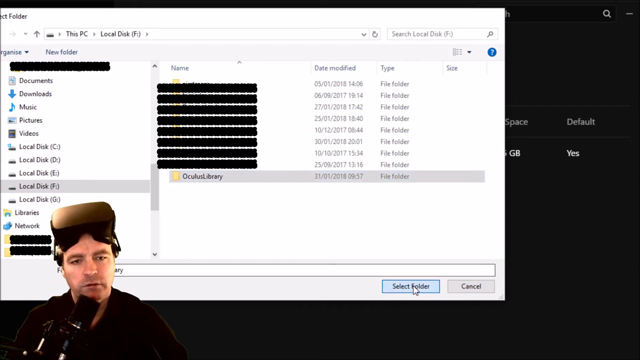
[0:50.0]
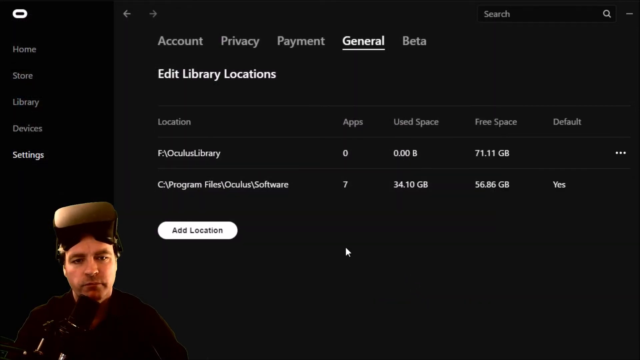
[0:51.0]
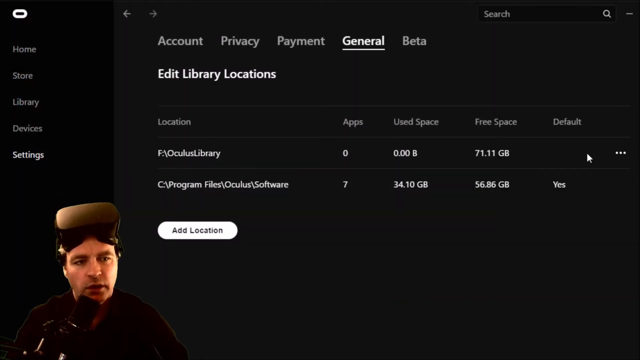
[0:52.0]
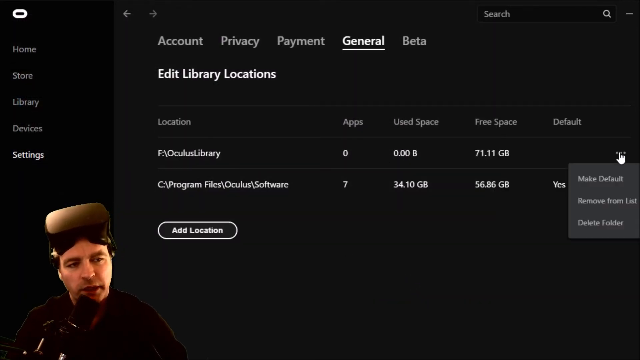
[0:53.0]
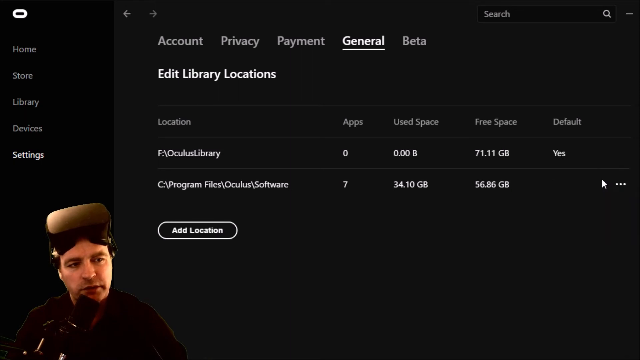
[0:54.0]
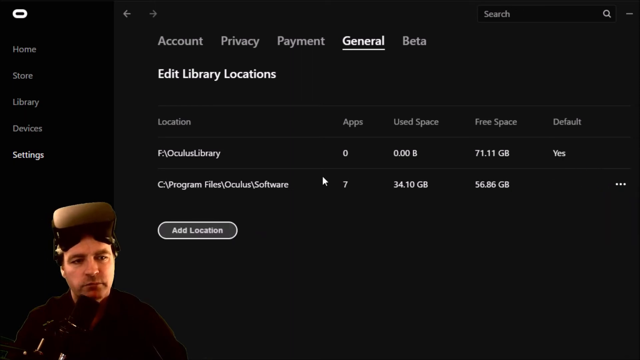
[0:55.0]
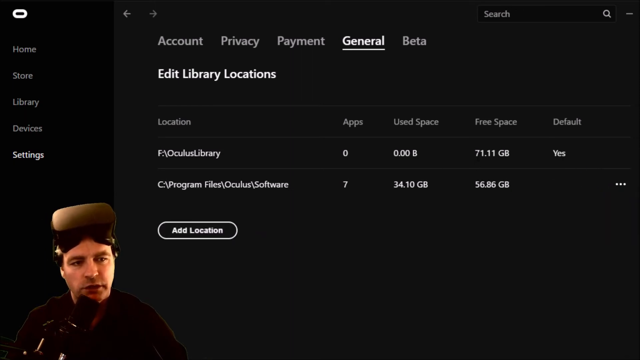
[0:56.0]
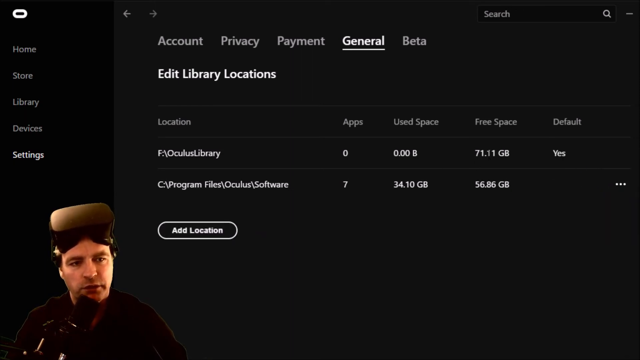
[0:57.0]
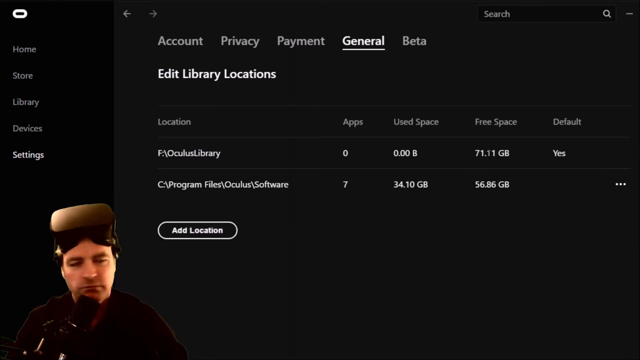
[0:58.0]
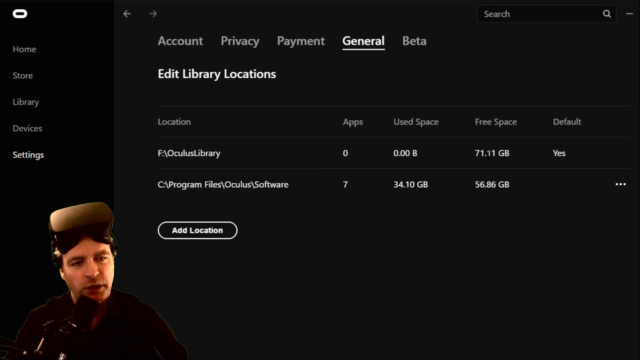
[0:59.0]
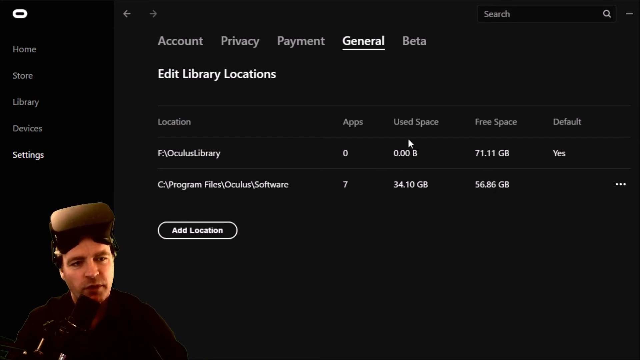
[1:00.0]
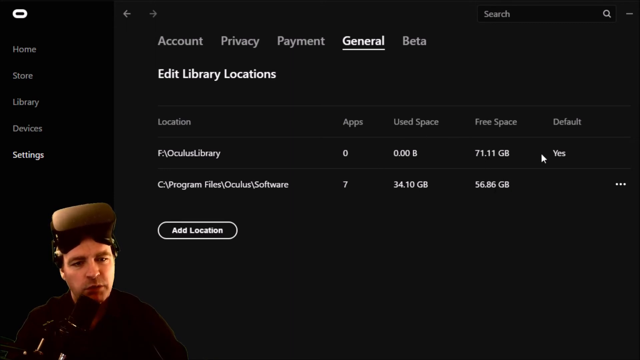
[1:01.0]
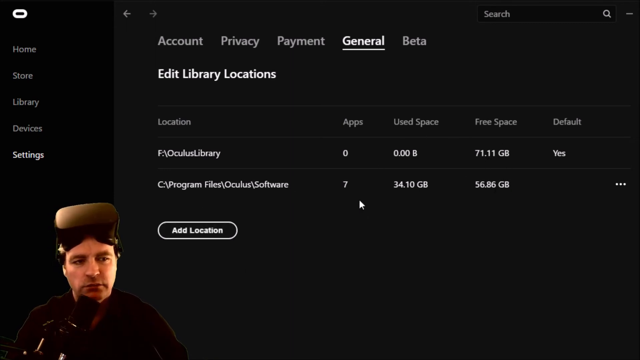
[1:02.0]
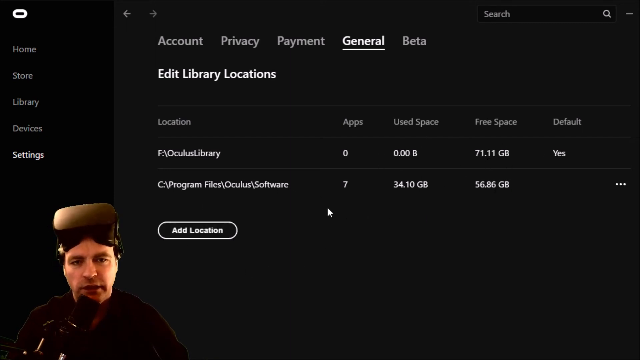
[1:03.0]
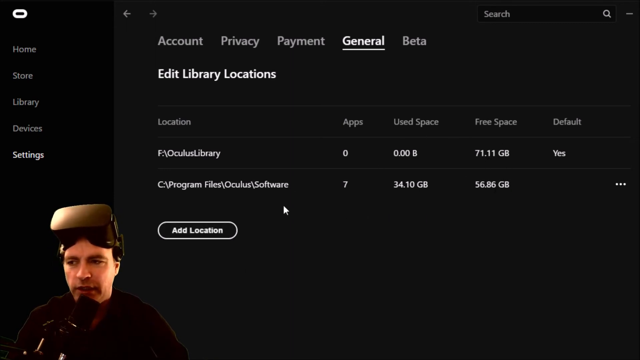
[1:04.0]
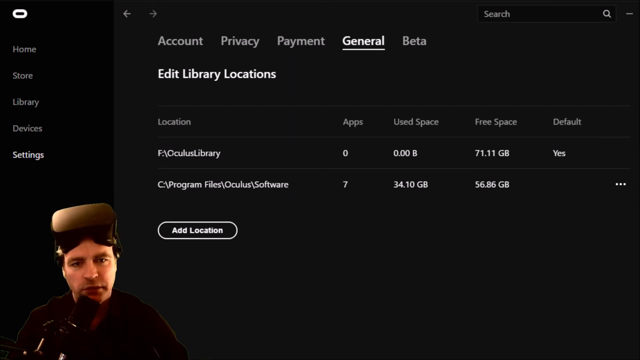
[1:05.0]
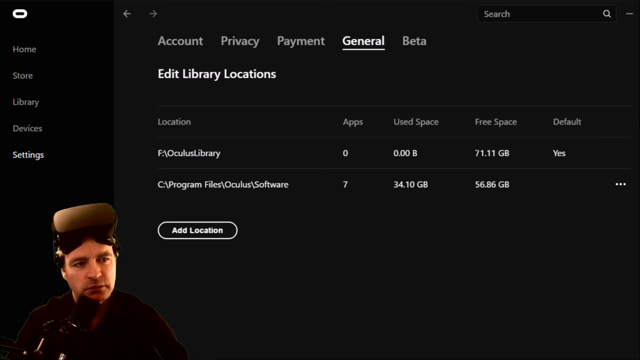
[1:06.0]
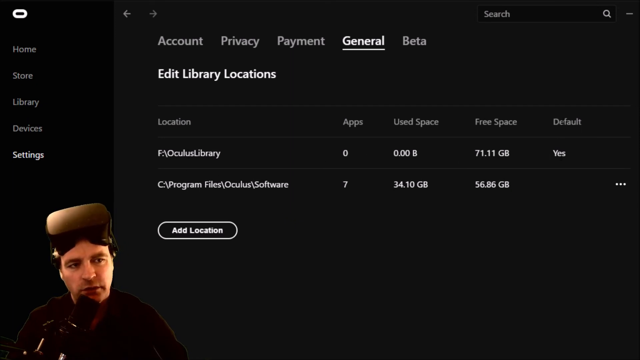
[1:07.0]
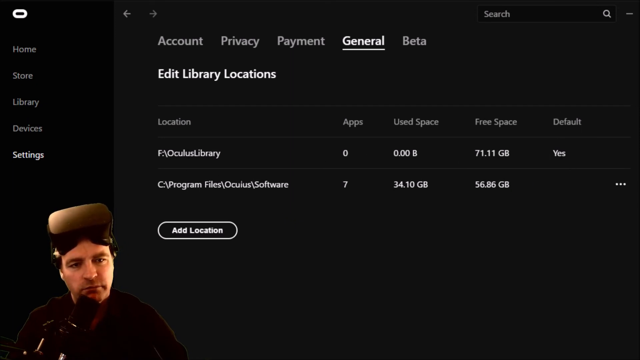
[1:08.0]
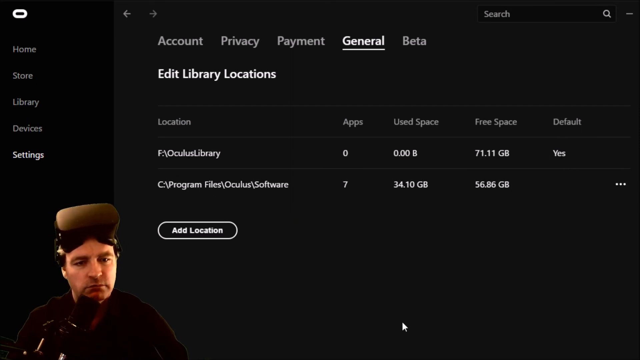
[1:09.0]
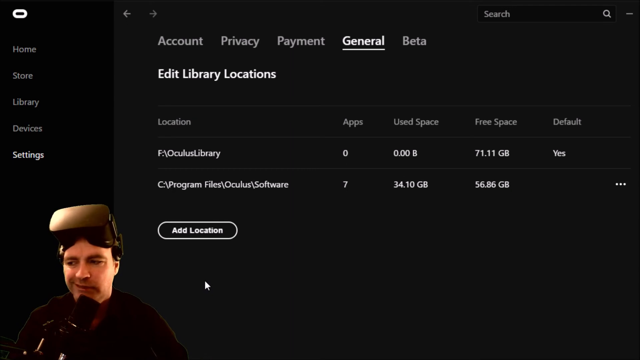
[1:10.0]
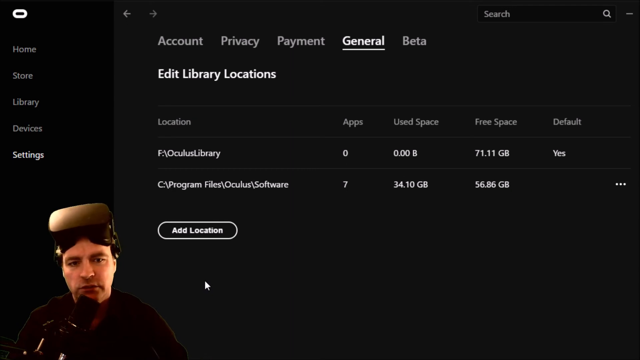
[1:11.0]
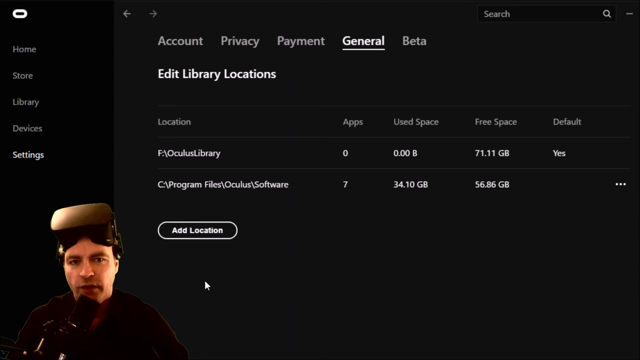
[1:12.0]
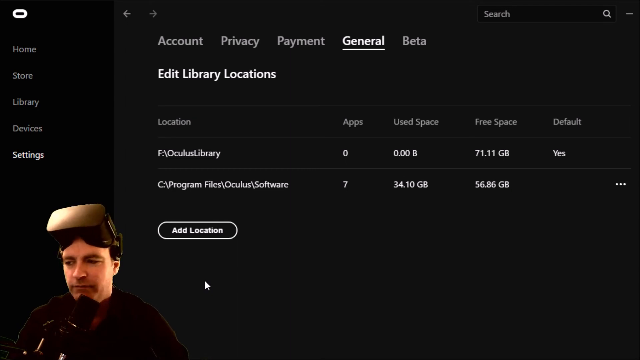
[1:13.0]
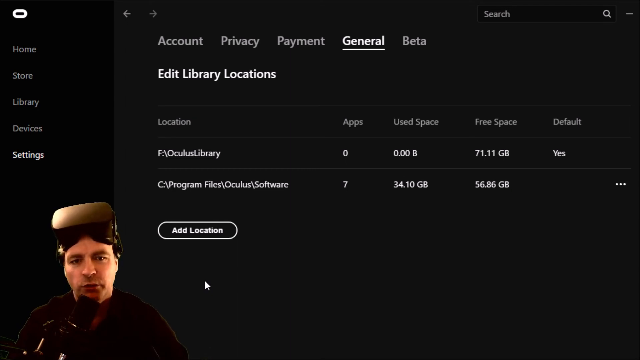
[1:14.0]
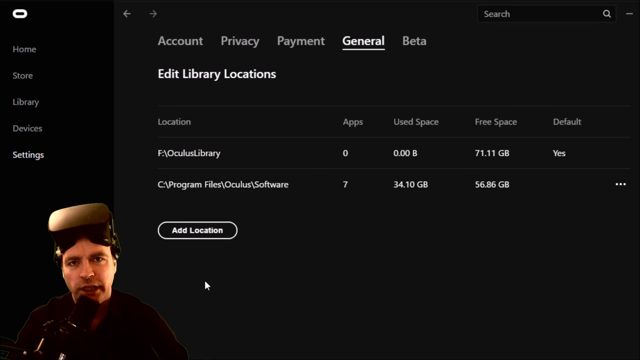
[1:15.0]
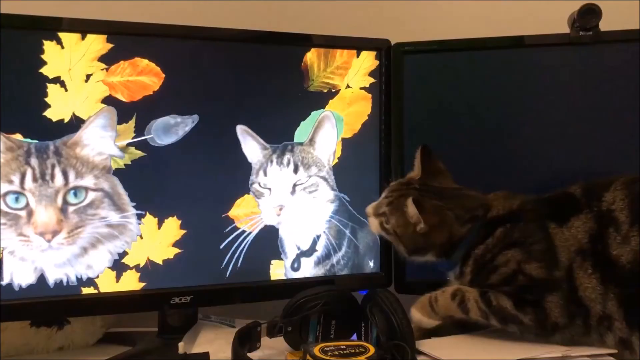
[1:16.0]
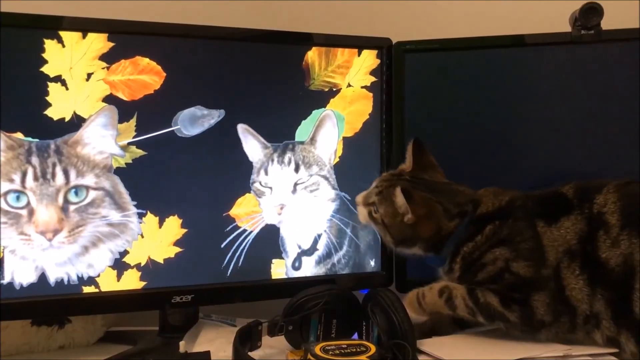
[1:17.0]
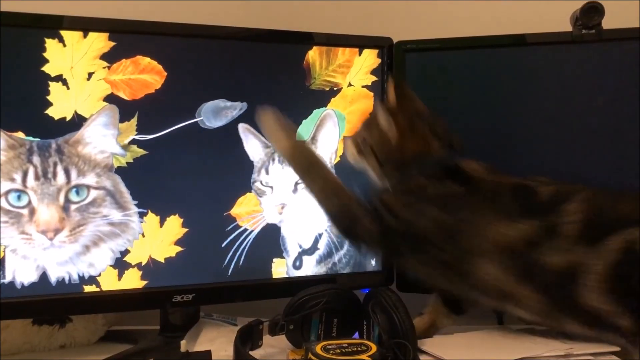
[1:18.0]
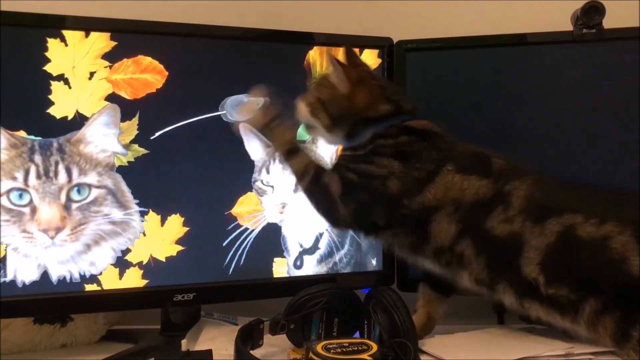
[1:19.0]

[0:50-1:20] The person has selected the folder he titled Oculus library and makes it the default library by right-clicking on default and setting it to yes. The screen shows 71.11 gigabytes of free space, zero used space and zero apps. He points out the different columns with his mouse and keeps talking. The next scene shows two screens: the right one is black and switched off, while the left-hand screen shows images of two cats along with yellow and orange leaves that look like maple and oak leaves. A mouse animal then appears in the center of the screen and moves to the right, and a real cat in front of the screen bats at the mouse and then tries to eat the screen to get it.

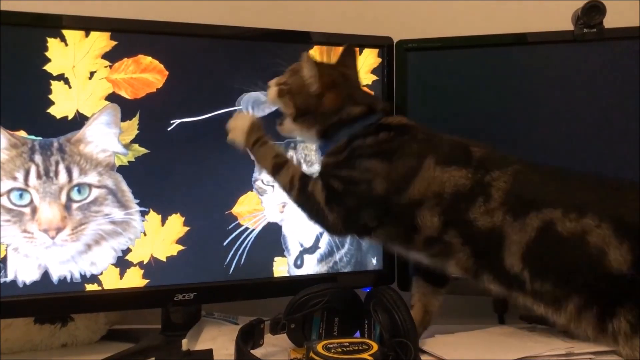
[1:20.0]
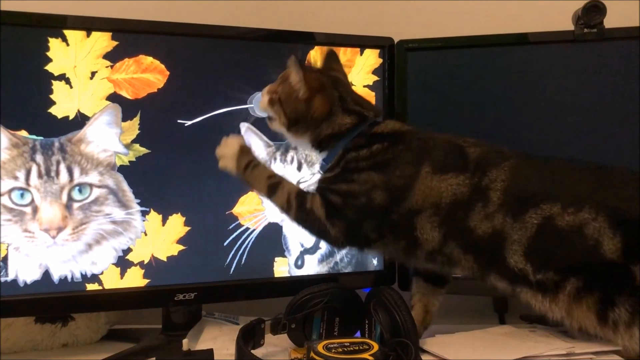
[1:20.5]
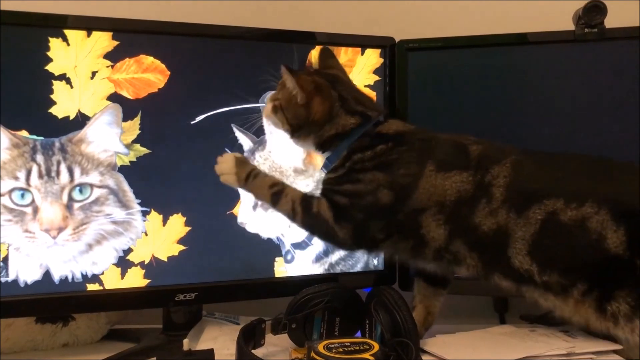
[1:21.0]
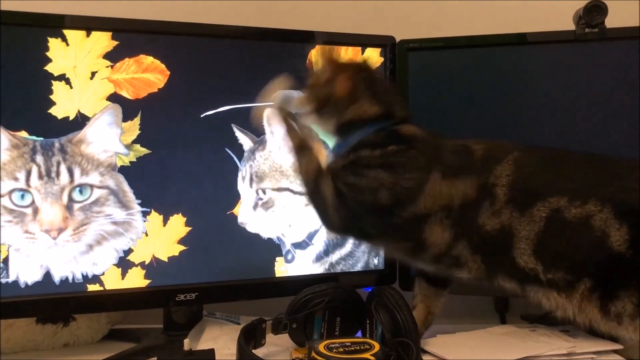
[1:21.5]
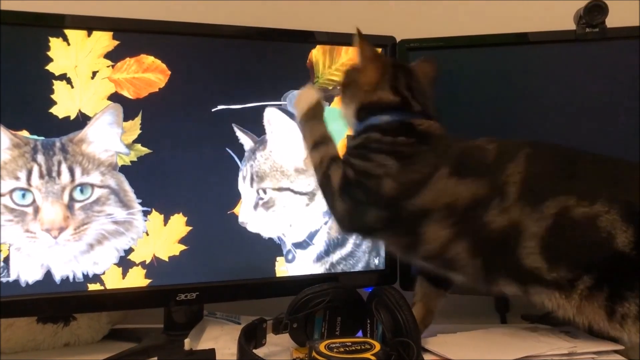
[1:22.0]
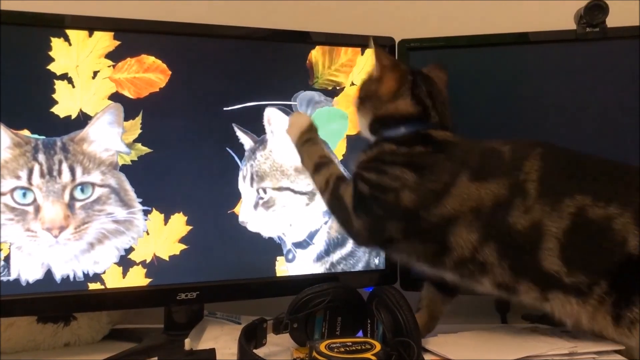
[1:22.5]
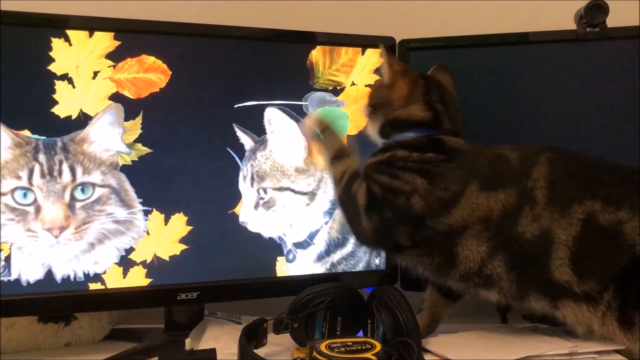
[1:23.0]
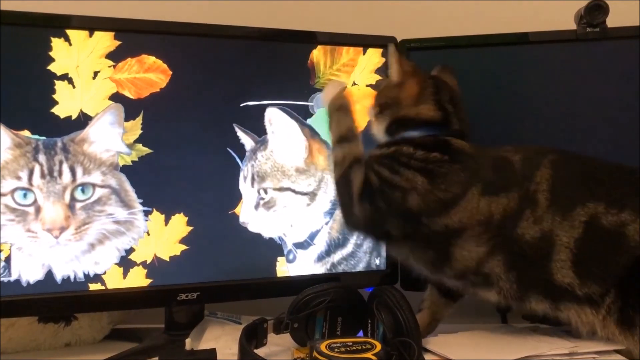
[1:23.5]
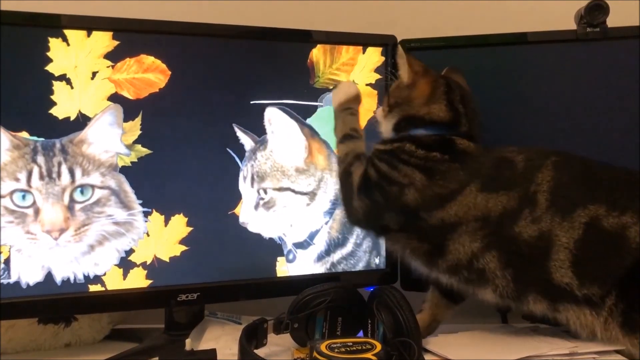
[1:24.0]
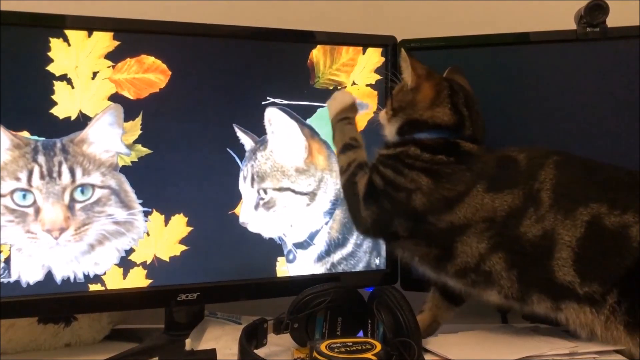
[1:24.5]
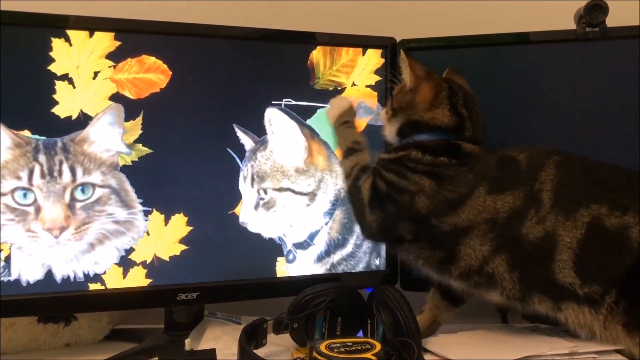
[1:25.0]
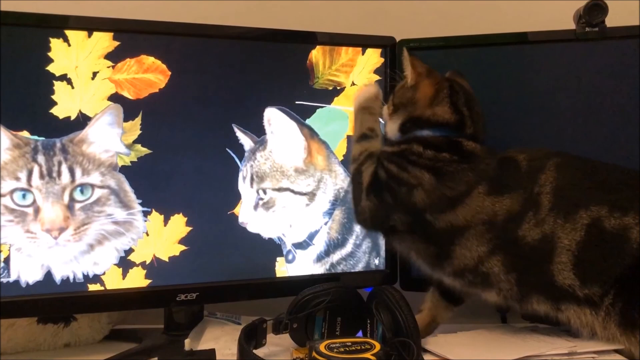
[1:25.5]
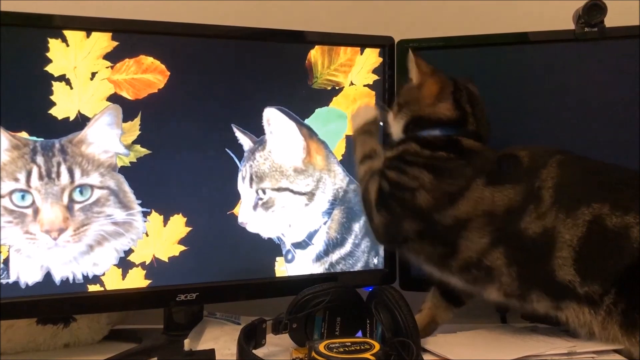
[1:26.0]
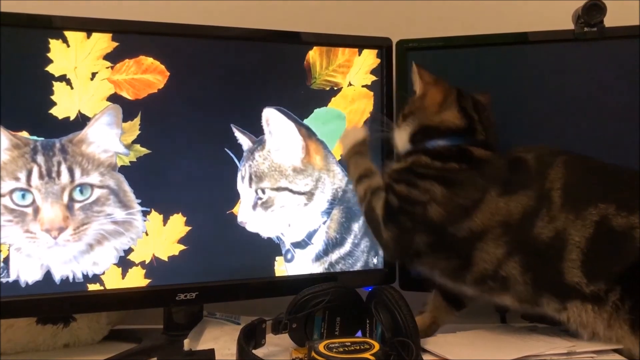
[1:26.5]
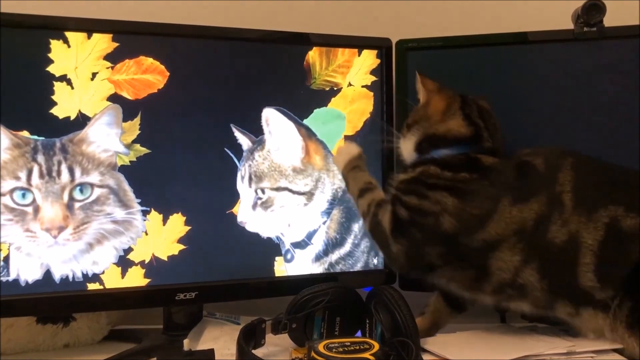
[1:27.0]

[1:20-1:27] The cat batting at the mouse opens its mouth, and from the front it looks like the cat is actually eating the mouse, but then it pulls away and the mouse continues moving to the right side of the screen and goes off the screen. The cat then paws at the computer screen, which slightly wavers as the cat pushes against it. The cat is a brown tabby with white on its face, under its head and nose, and on the left paw it uses to bat at the screen. The person is no longer visible in the lower left corner; there is only the real cat and the cats on the screen, which do not move.